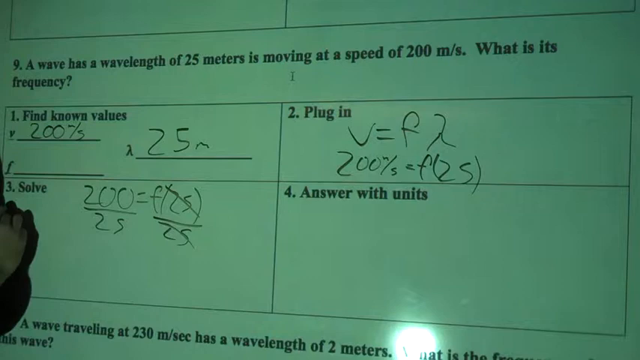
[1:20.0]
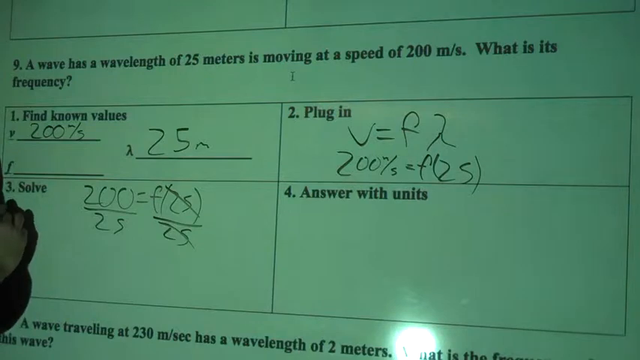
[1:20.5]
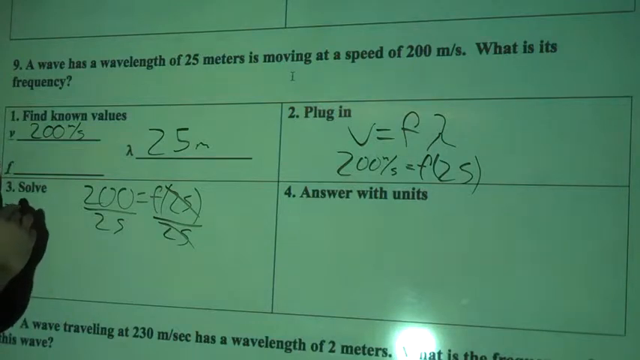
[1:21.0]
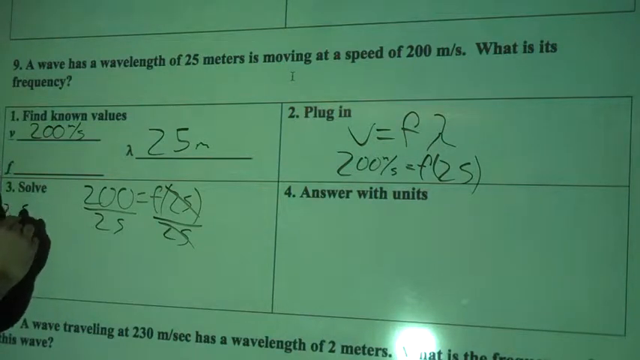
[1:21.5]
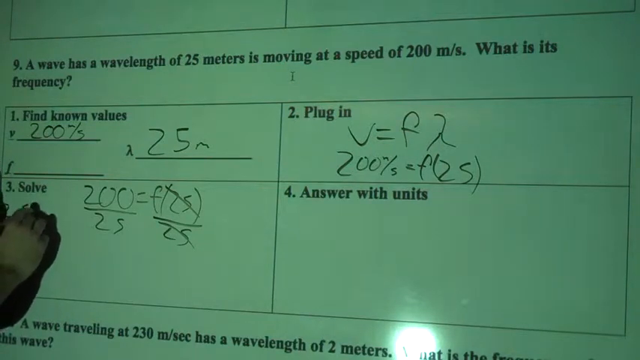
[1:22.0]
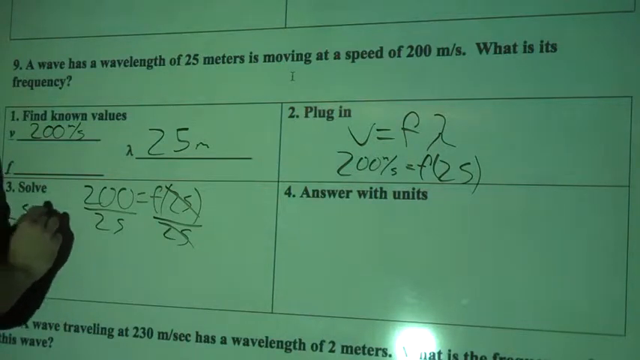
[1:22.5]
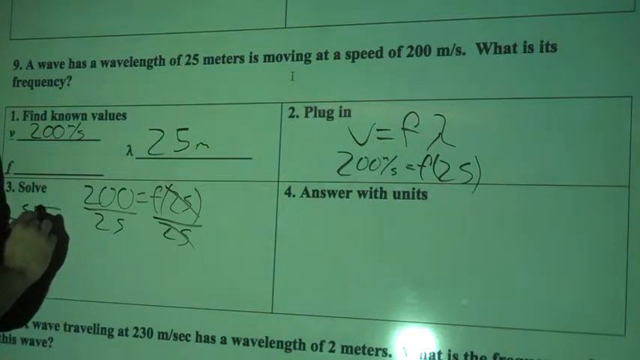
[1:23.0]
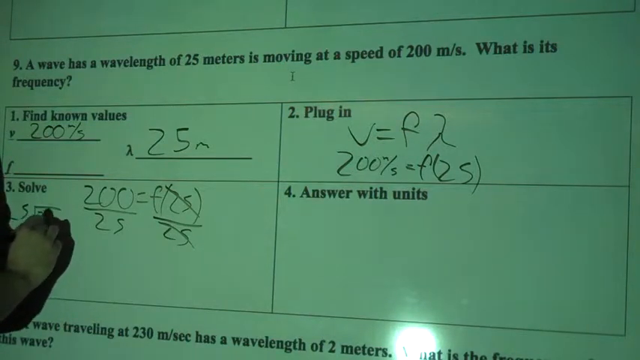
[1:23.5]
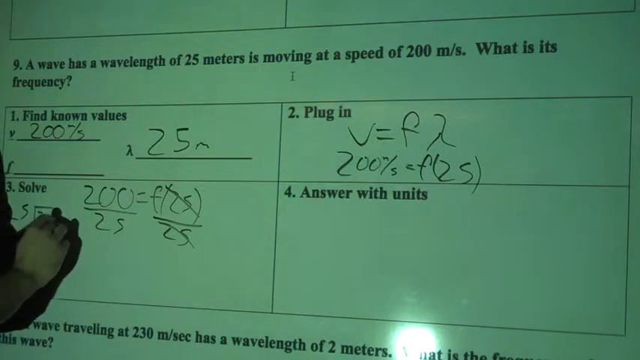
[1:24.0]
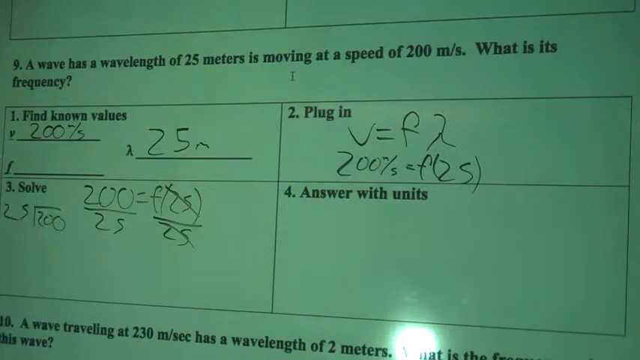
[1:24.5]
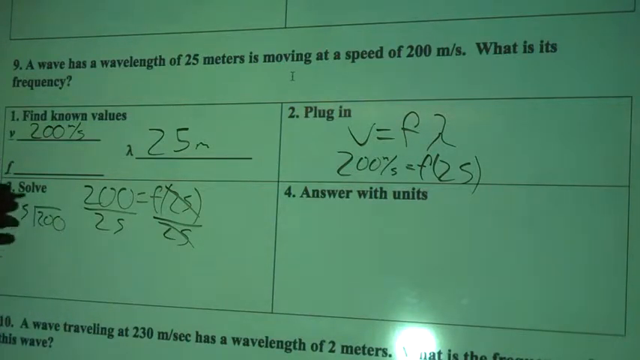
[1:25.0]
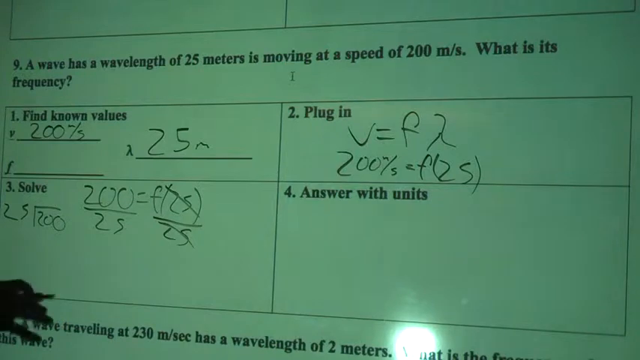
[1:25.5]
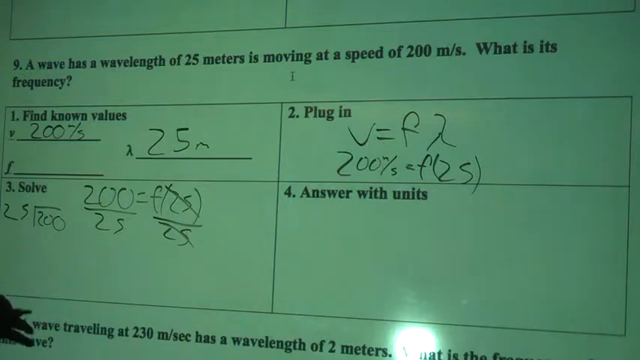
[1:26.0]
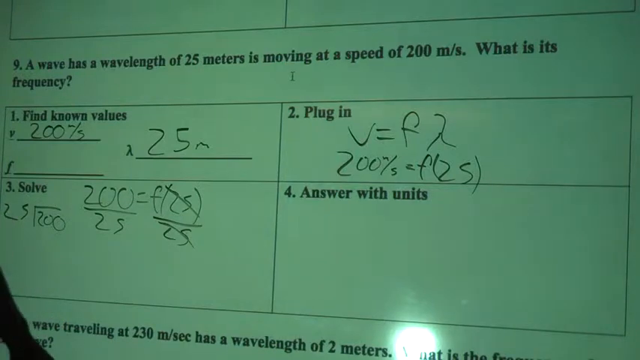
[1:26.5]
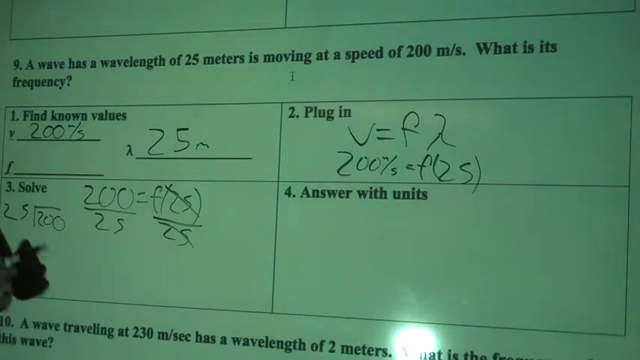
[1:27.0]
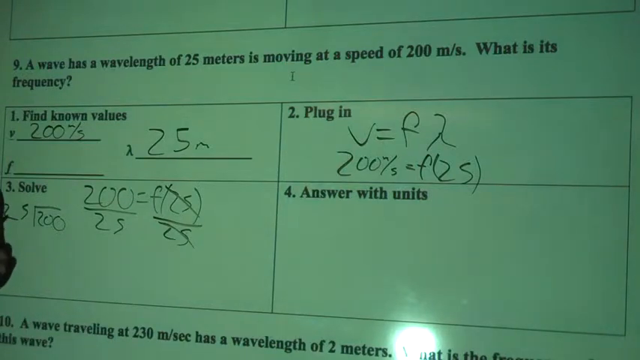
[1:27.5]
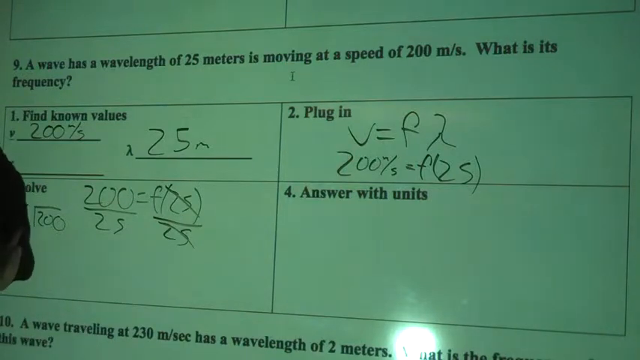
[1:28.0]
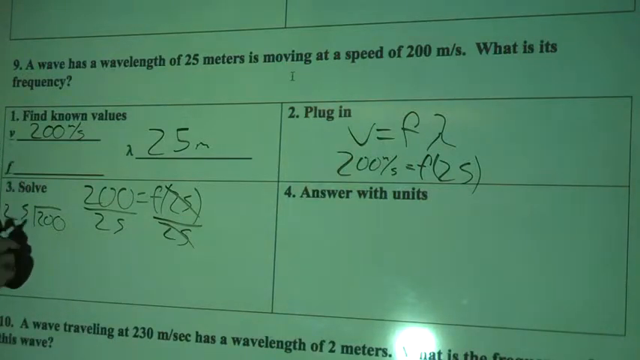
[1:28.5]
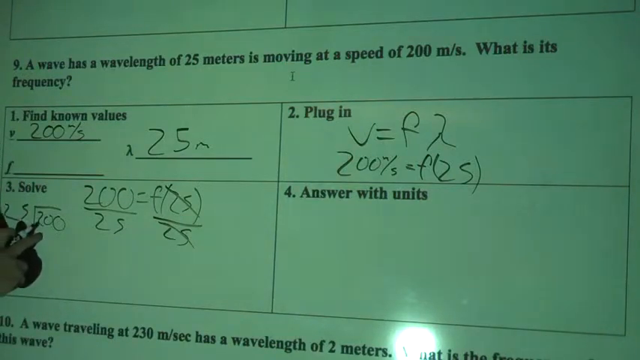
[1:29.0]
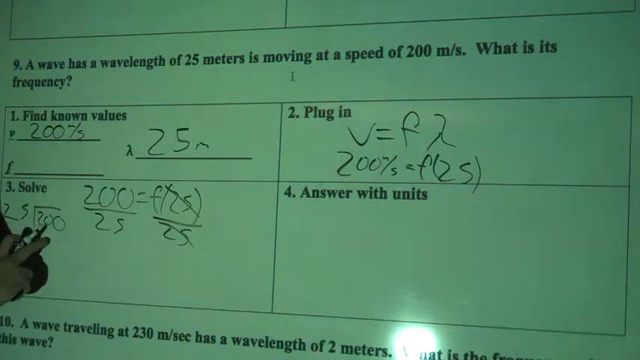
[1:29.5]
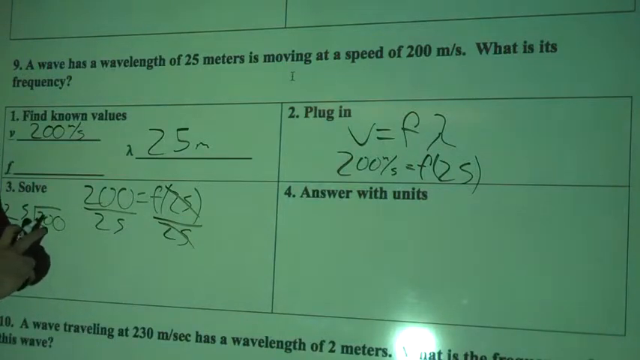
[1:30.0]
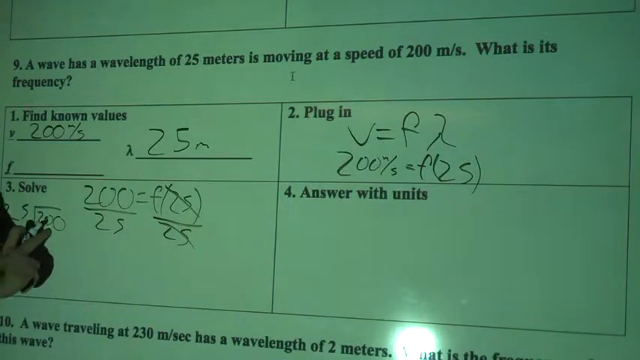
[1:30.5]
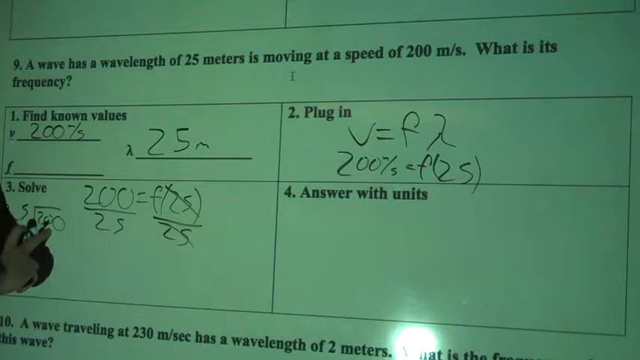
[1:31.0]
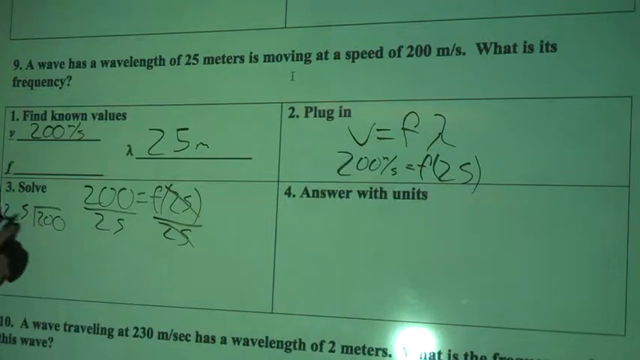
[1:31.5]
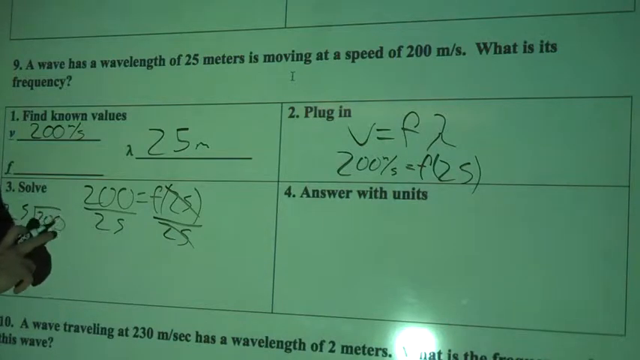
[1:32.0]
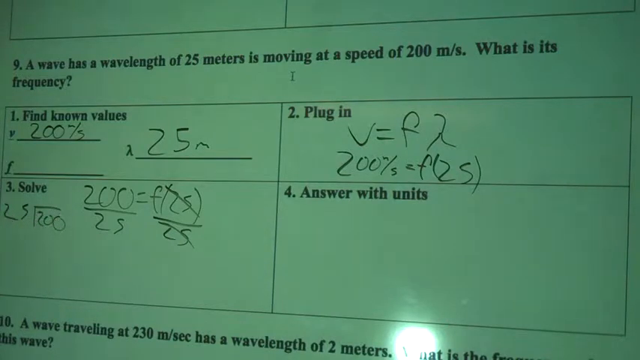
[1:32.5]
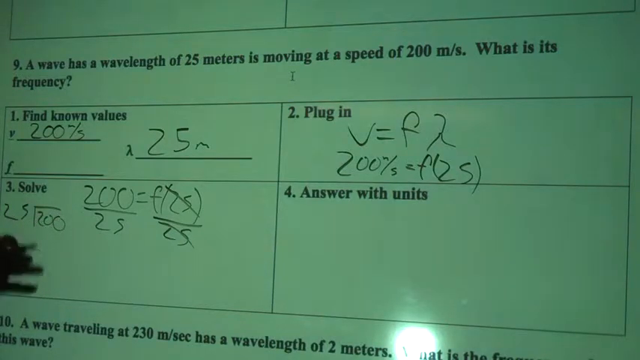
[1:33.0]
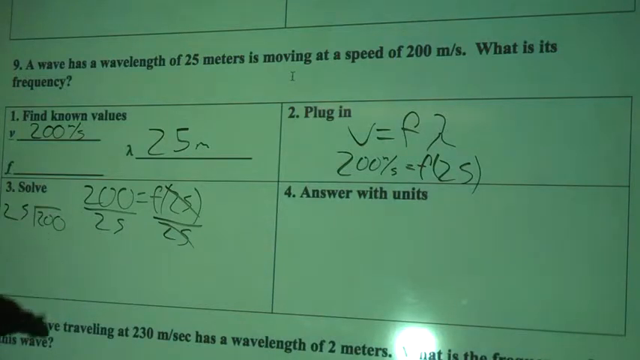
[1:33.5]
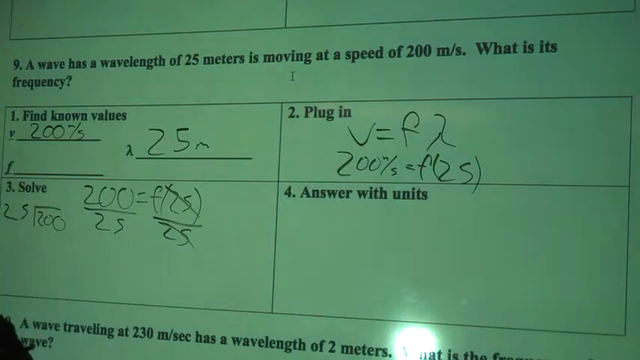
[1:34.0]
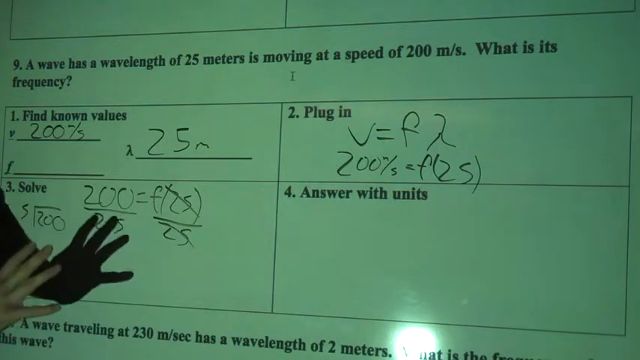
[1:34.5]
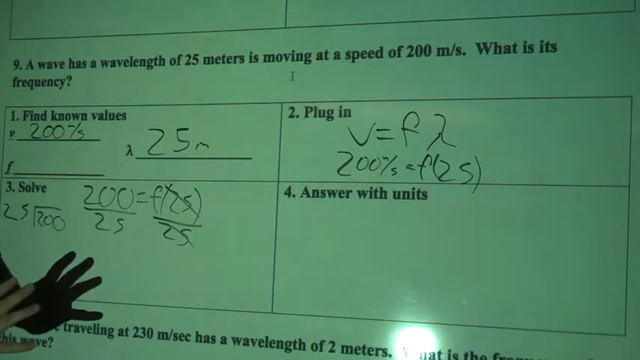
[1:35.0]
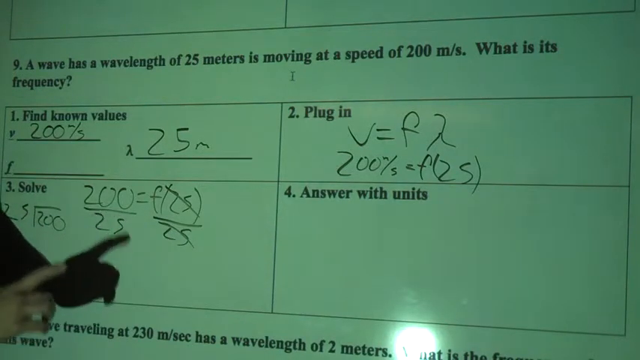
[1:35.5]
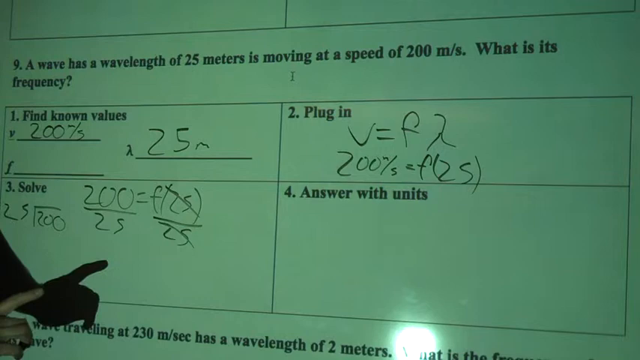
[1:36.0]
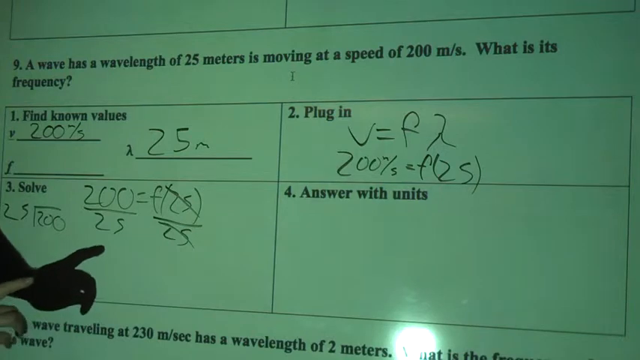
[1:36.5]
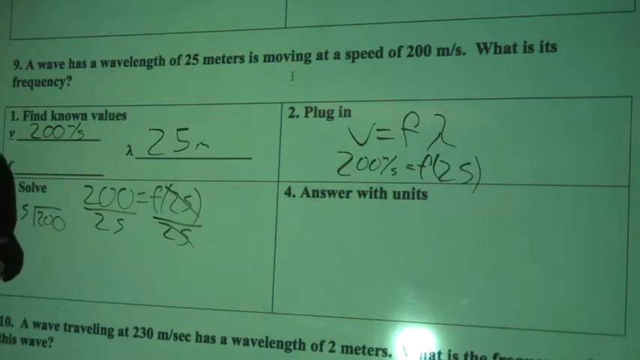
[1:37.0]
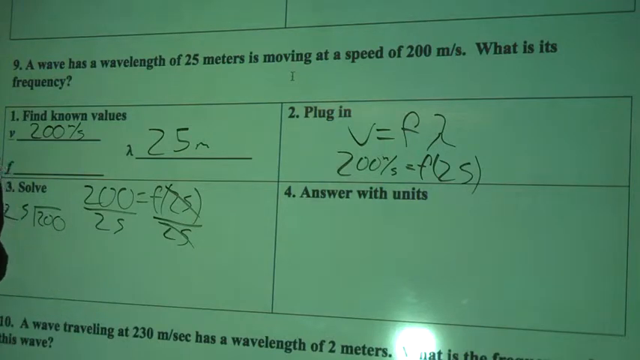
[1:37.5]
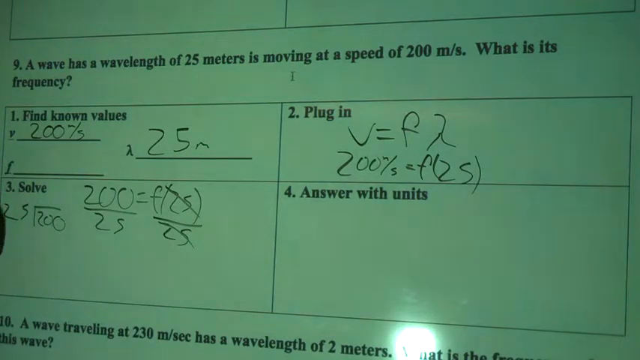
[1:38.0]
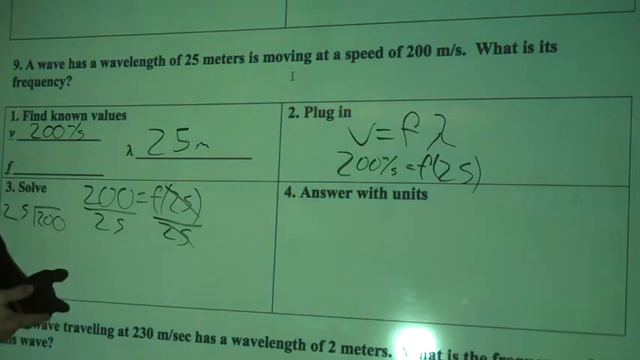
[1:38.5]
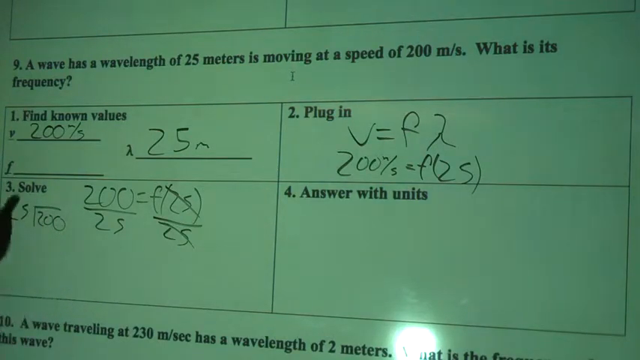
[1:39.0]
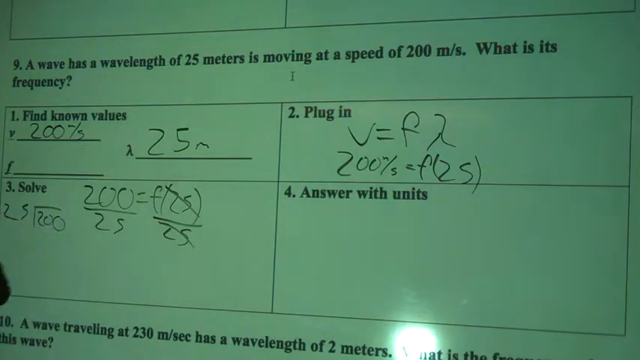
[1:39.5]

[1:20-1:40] The professor writes more into the answer boxes, adding what seems to be 25 and 200 squared. He appears to be explaining something, using many hand gestures, often with his hands turned upside down. He holds a black Expo marker, which he has been using to write on the board, a whiteboard with the answers projected onto it.